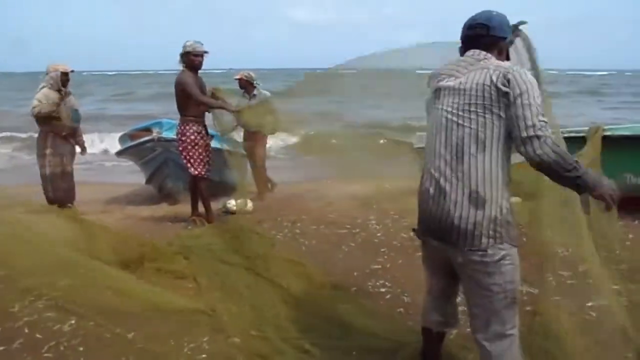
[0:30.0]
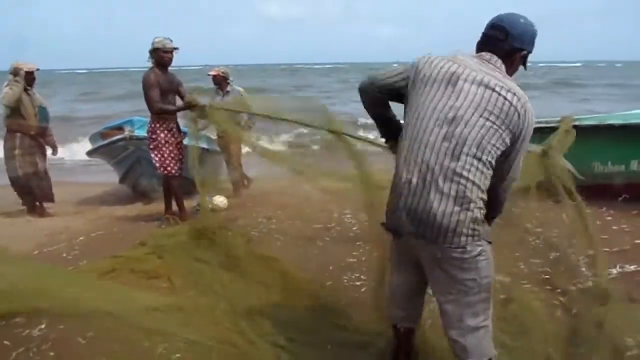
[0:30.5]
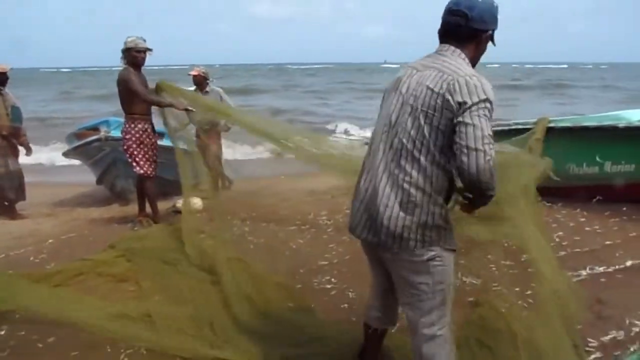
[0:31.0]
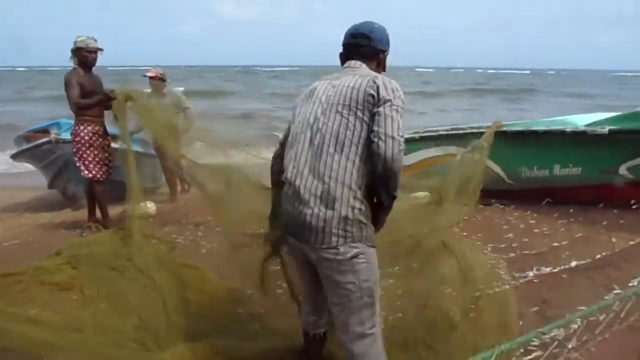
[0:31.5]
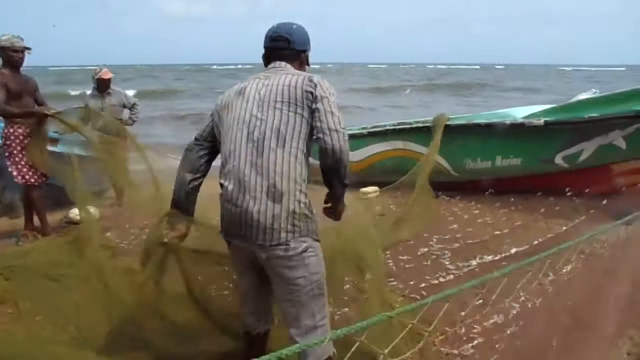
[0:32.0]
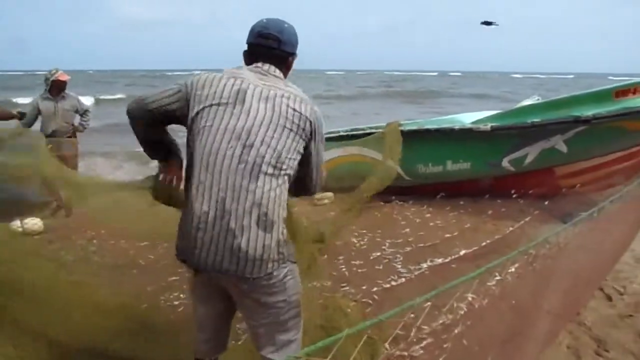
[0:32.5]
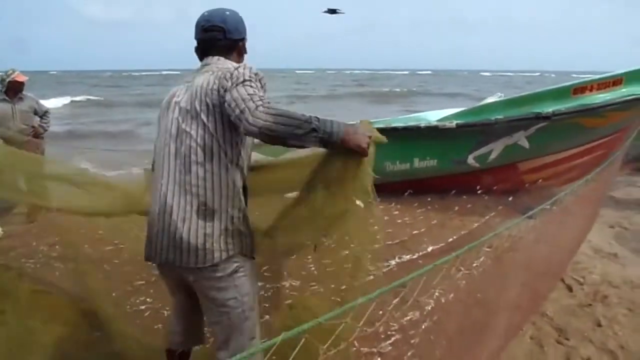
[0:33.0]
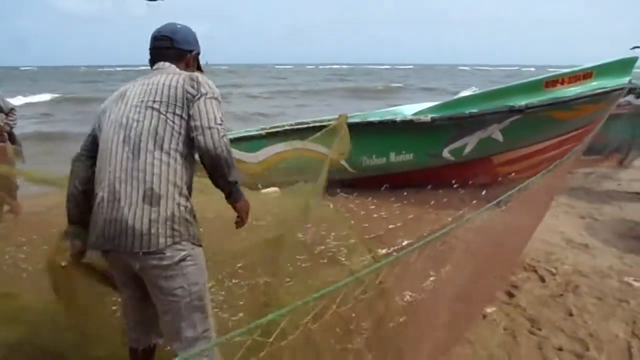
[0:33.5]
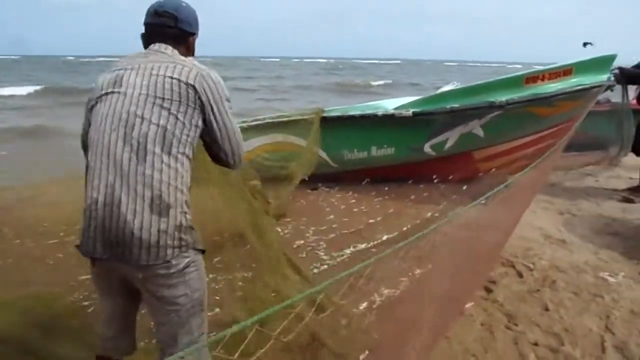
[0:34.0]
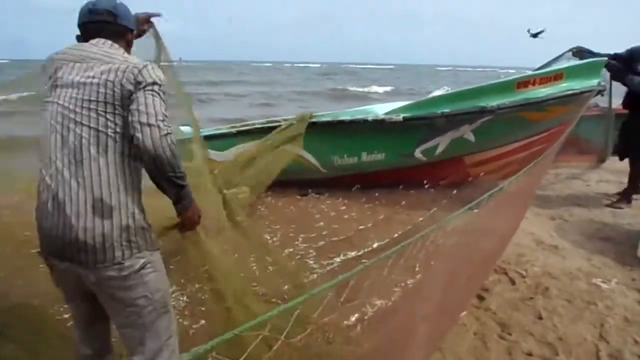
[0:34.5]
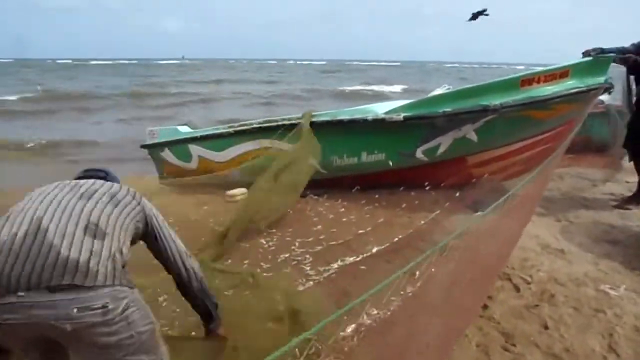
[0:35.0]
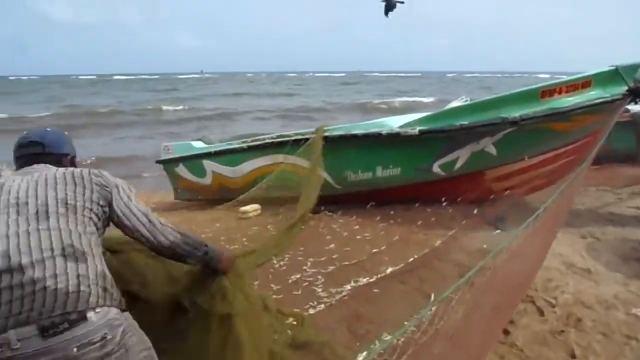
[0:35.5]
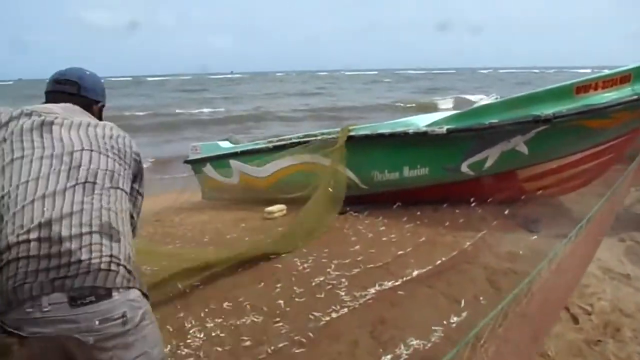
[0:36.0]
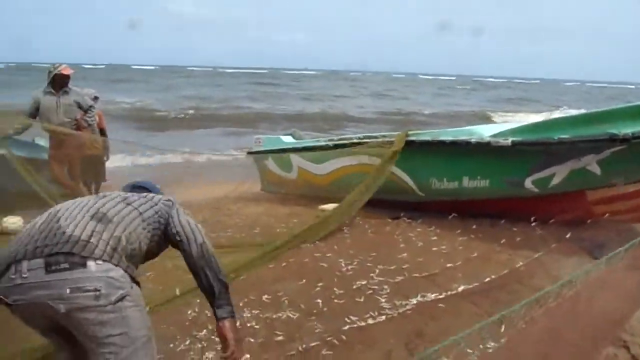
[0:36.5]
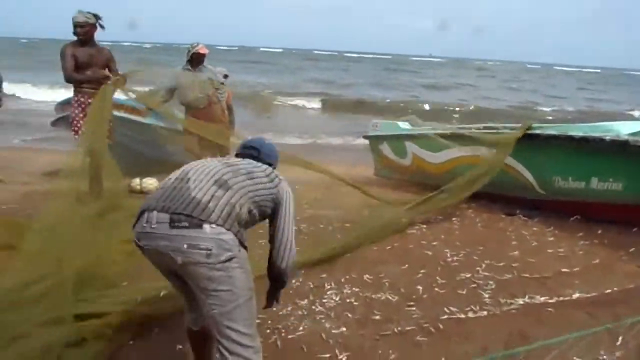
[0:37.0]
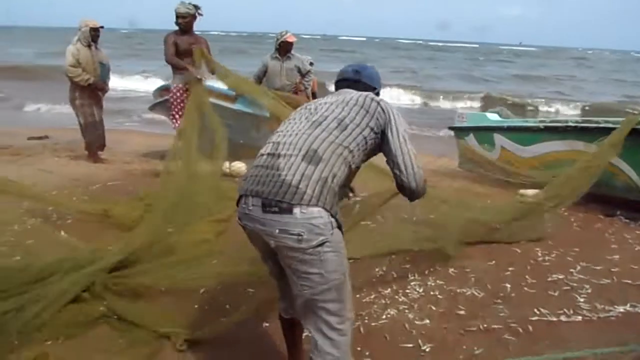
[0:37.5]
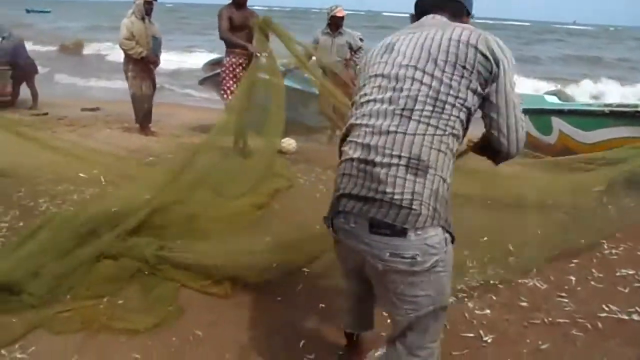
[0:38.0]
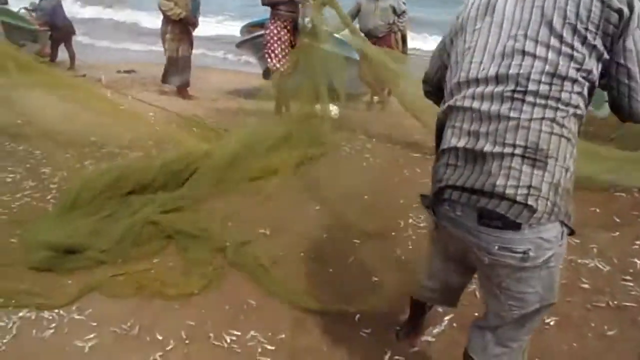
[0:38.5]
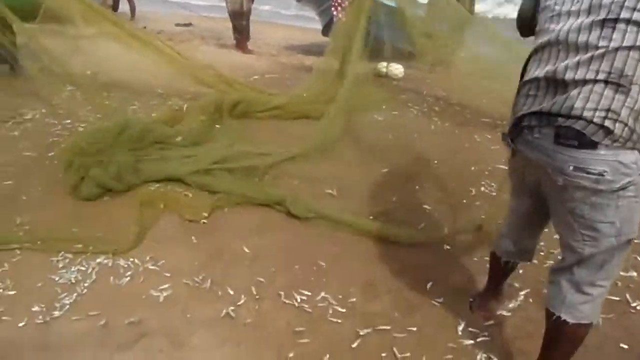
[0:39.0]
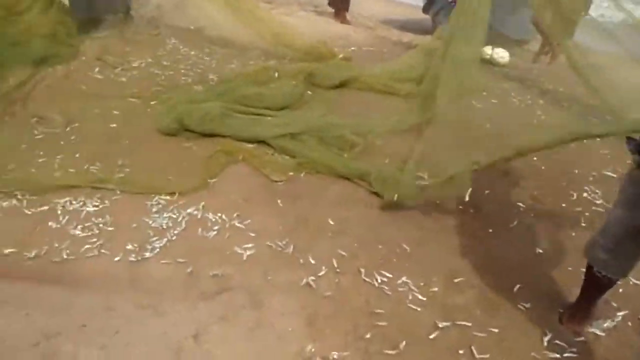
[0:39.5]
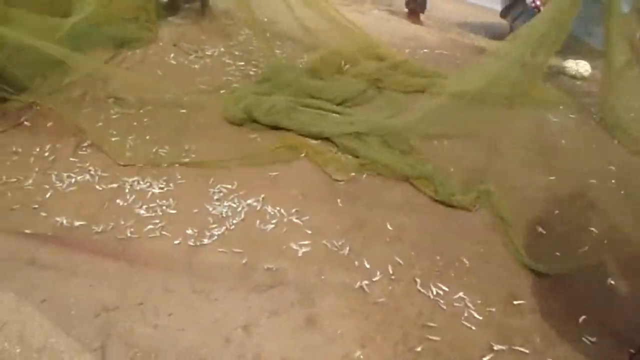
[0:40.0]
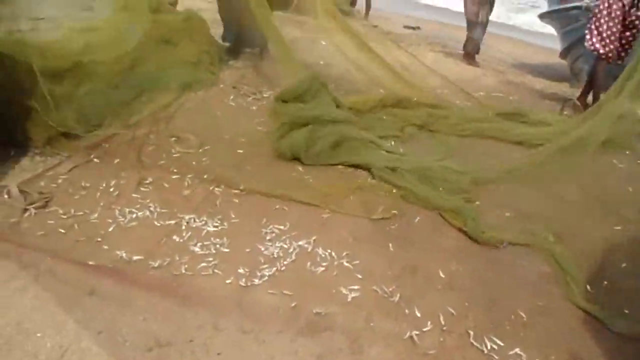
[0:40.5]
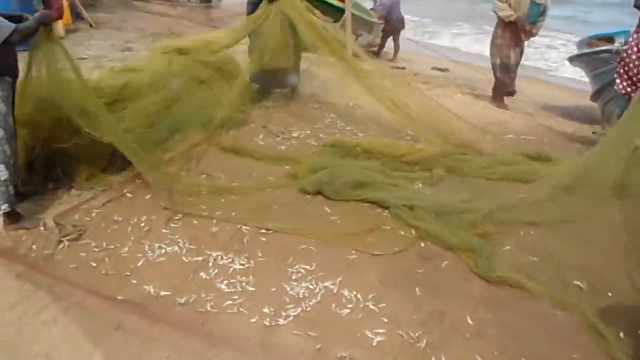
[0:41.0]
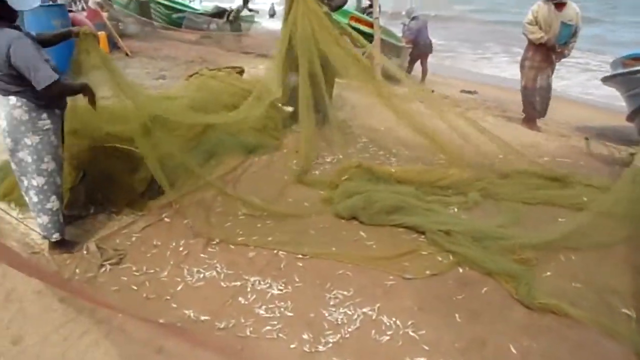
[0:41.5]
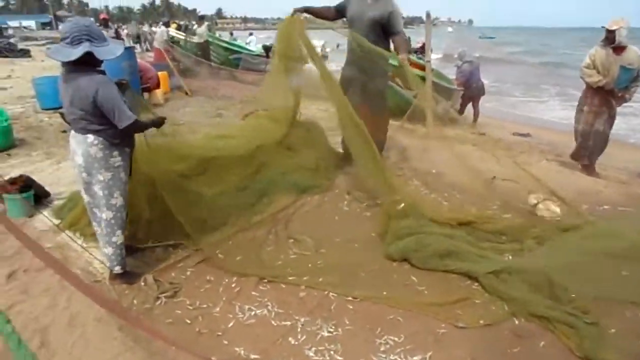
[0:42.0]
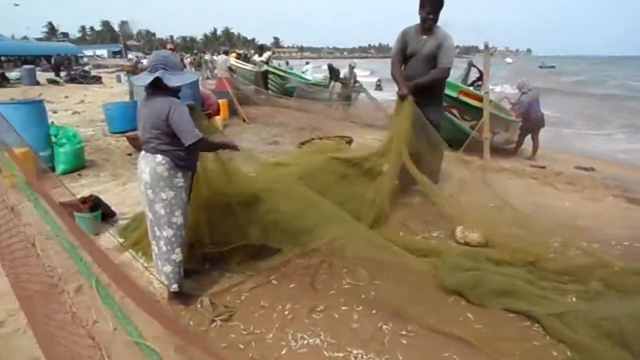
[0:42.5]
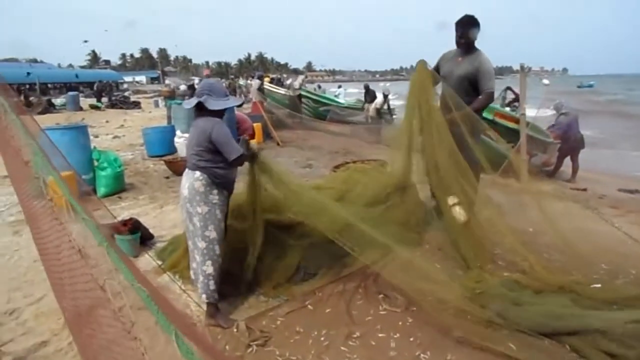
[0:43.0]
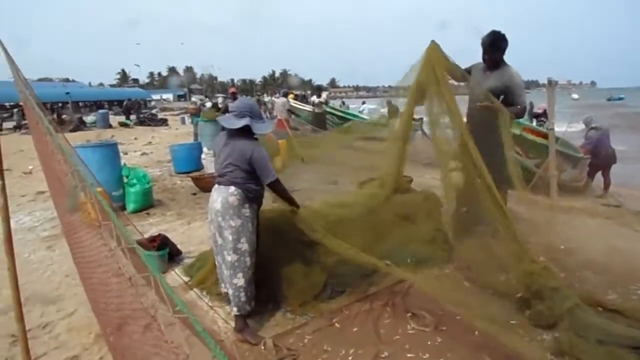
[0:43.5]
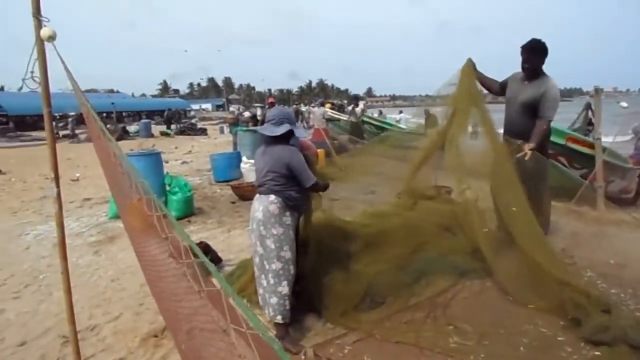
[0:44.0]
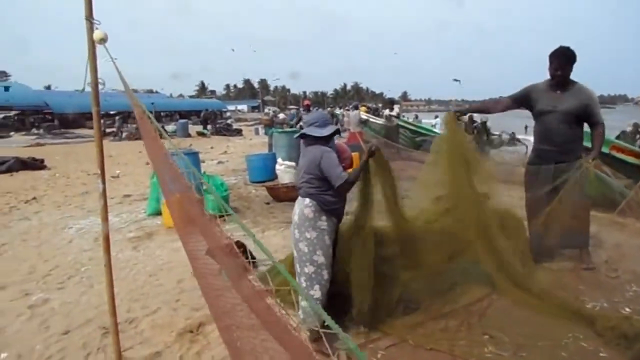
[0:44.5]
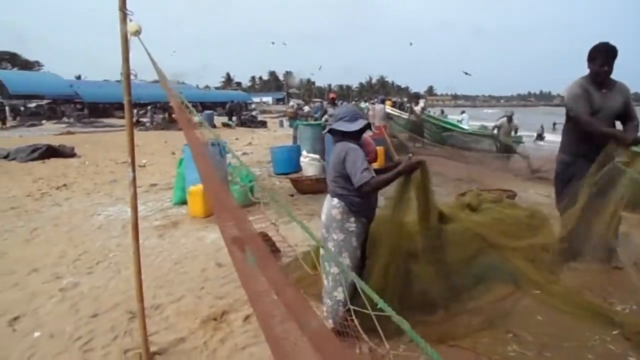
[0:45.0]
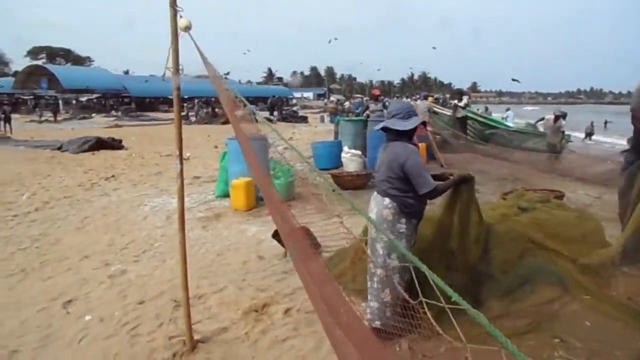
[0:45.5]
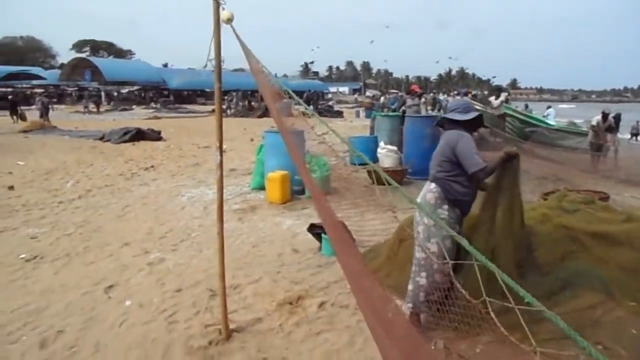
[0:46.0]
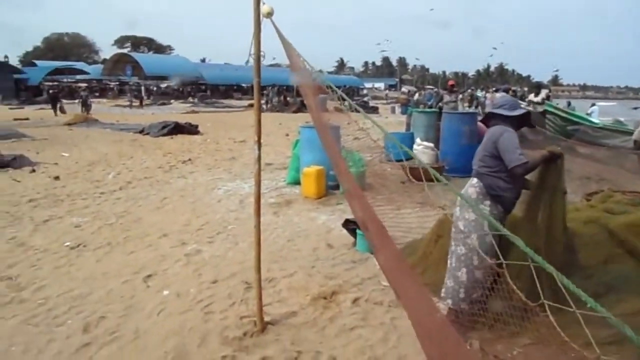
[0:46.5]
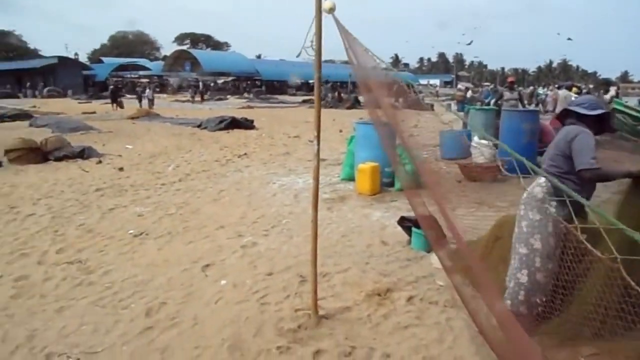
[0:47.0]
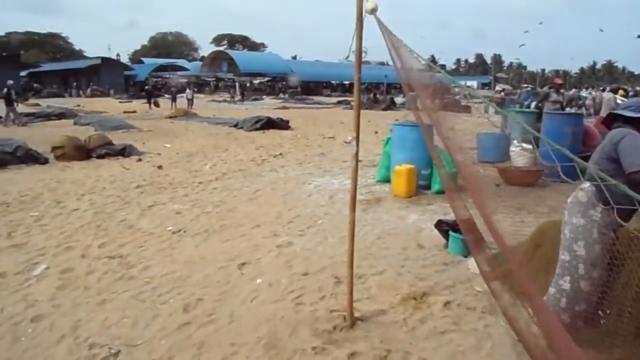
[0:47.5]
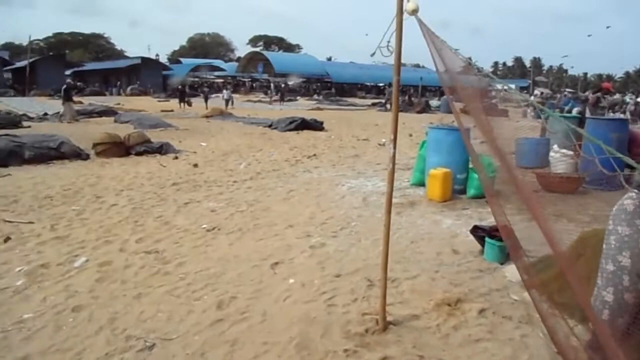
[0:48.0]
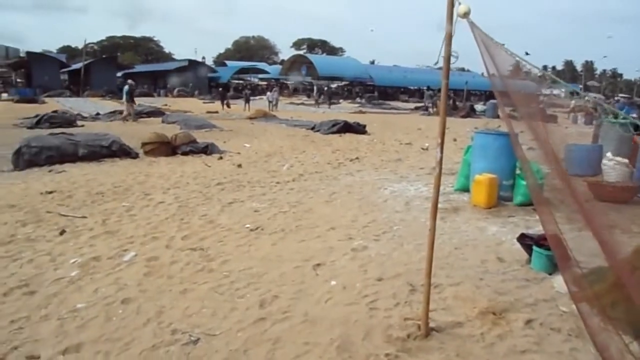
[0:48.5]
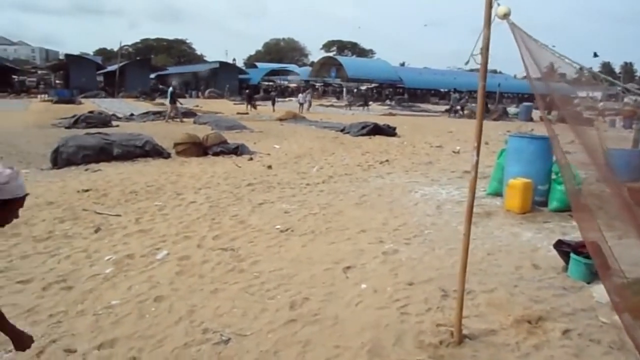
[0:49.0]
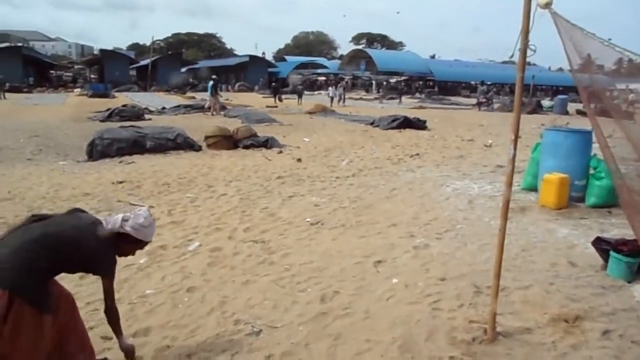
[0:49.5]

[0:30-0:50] On the beach, the people continue to drag the nets and untangle them from over a little fishing boat. No big fish seem to be coming in, but hundreds of what appear to be tiny fish are all over a tarp laid out underneath the fishing net. The camera pans to what is behind the net, showing more of the beach: many people and many shelters with people standing under them. The place is public and crowded, and it looks very hot. People are standing right on the shore, with the ocean right there. There is a lot of trash on the beach, including big barrel trash cans and green trash bags, and black tarps are laid out everywhere. Some people appear to be wearing just swimming trunks, while many others are fully clothed. One man in the main frame wears white jeans, a striped button-up shirt and a blue hat, and a woman wears a full dress. The area looks poor.